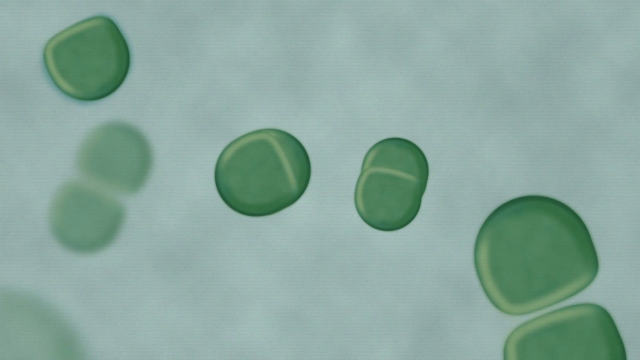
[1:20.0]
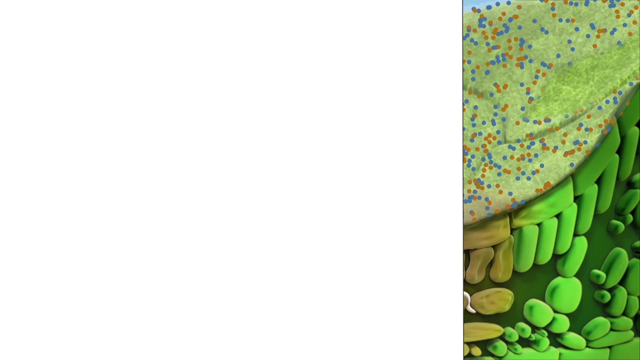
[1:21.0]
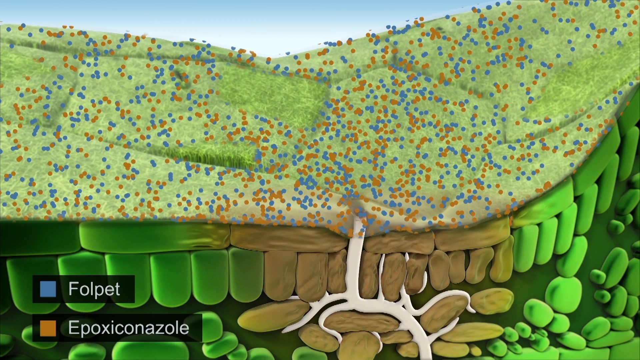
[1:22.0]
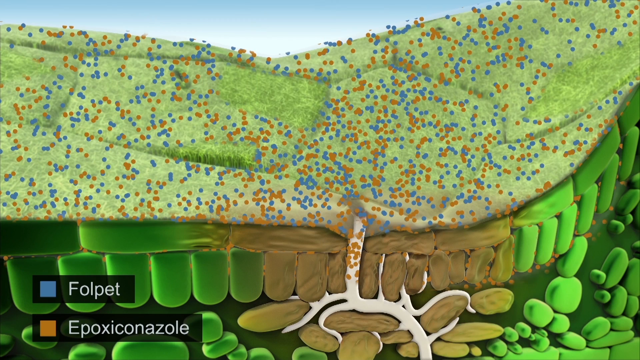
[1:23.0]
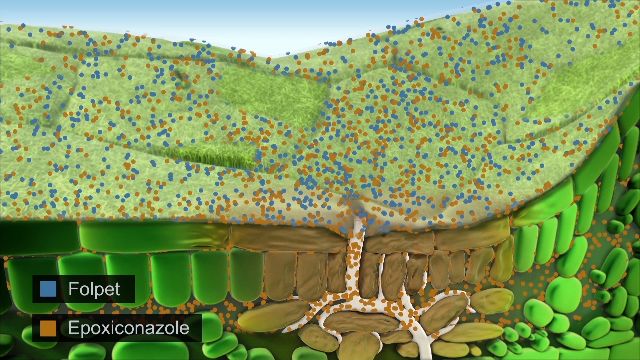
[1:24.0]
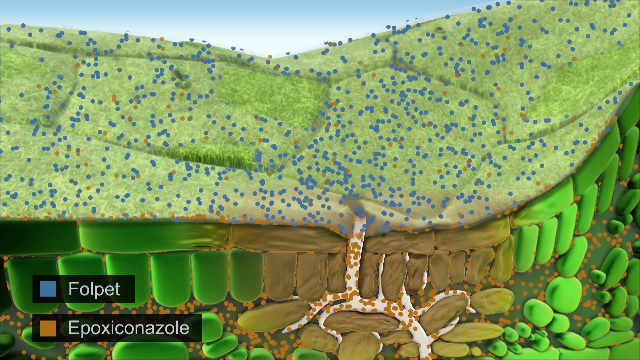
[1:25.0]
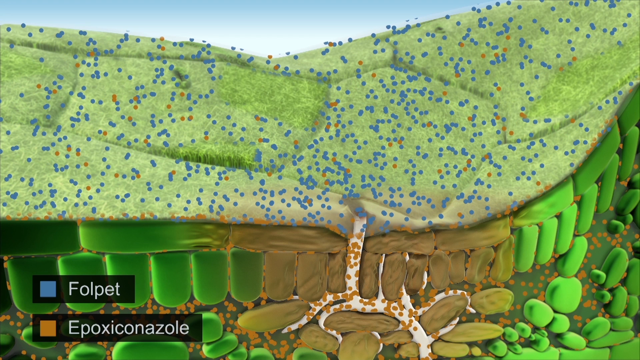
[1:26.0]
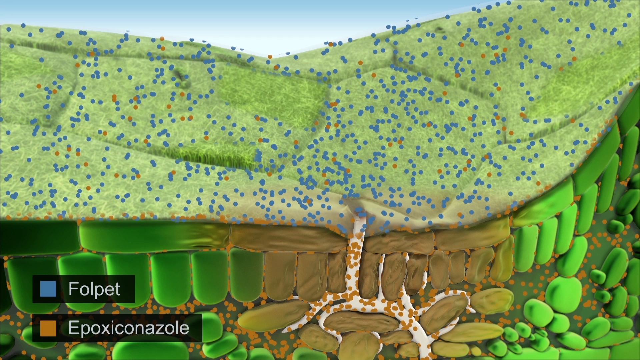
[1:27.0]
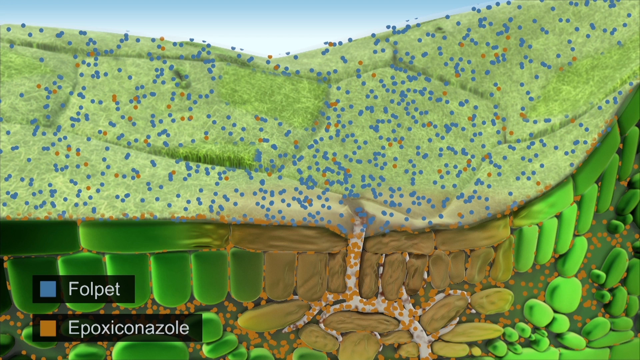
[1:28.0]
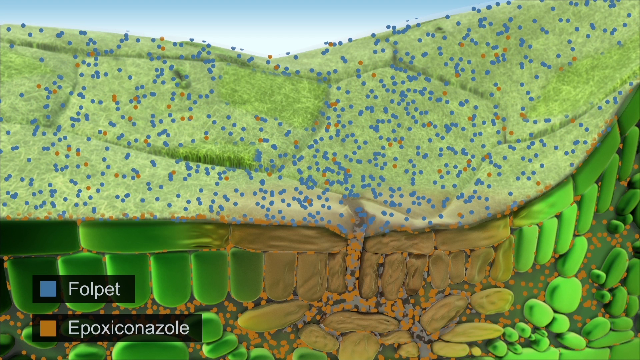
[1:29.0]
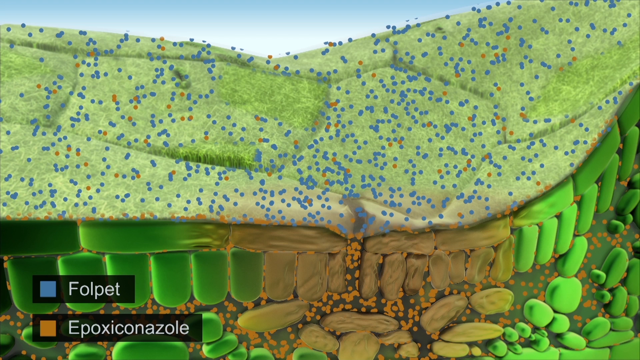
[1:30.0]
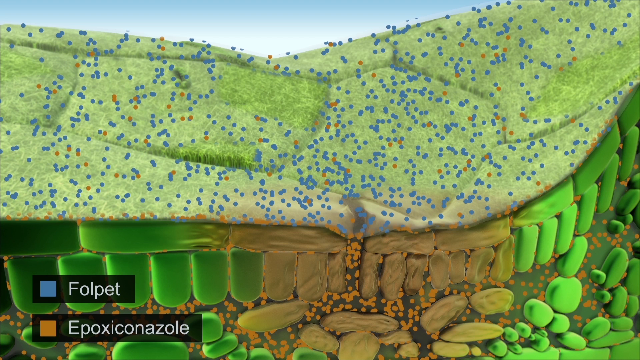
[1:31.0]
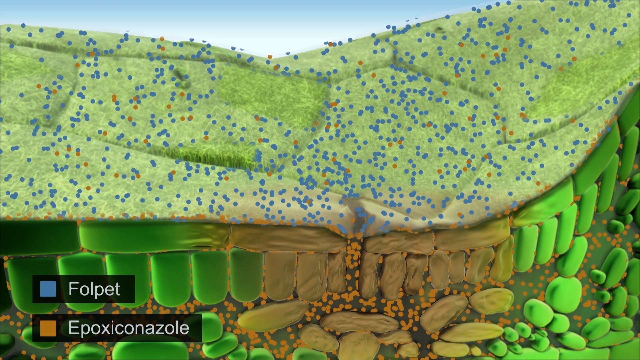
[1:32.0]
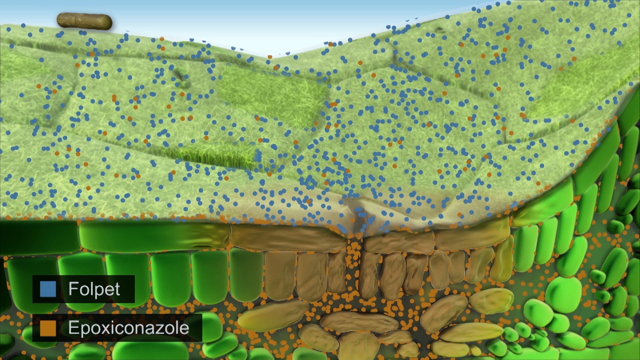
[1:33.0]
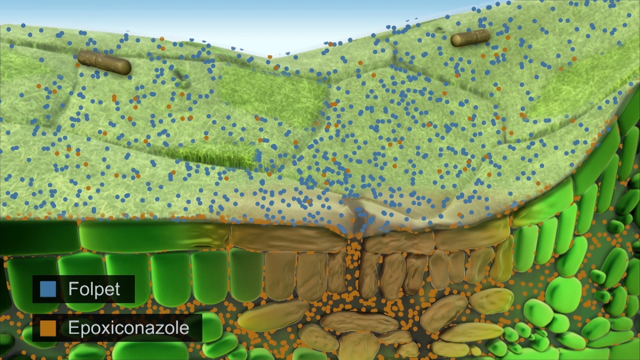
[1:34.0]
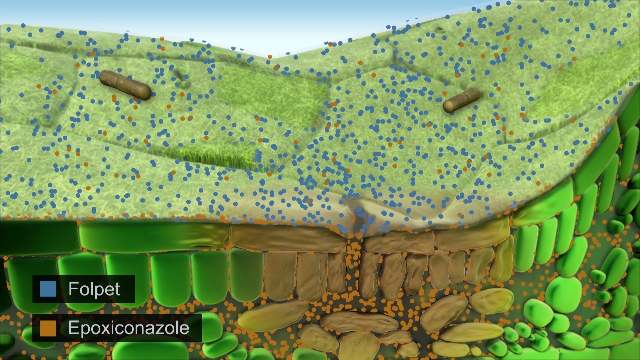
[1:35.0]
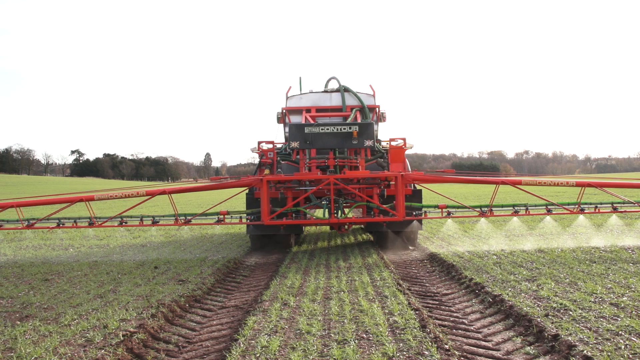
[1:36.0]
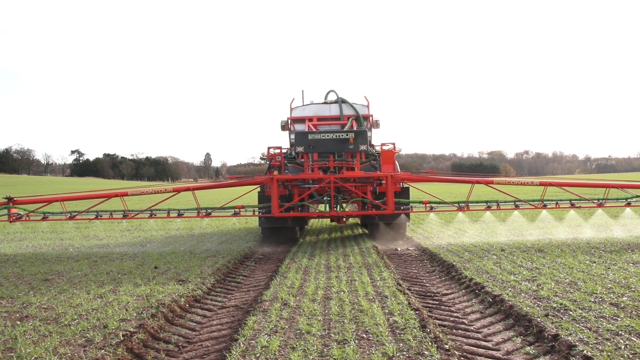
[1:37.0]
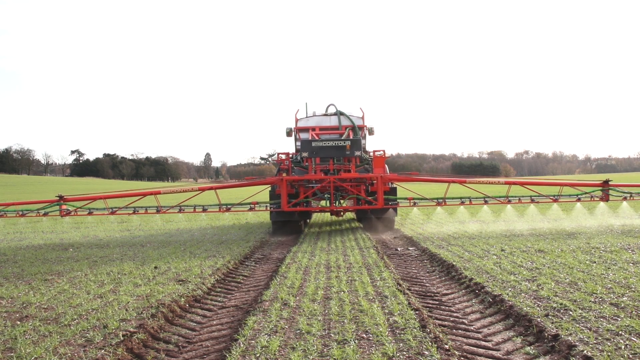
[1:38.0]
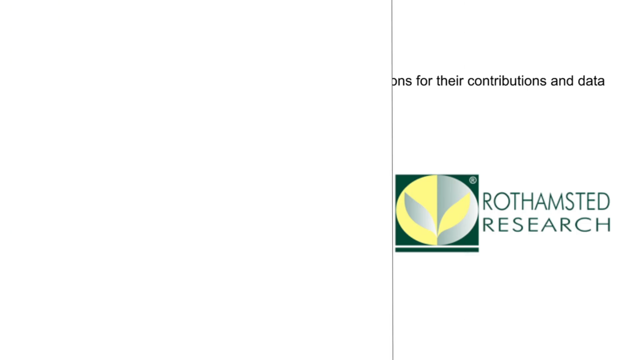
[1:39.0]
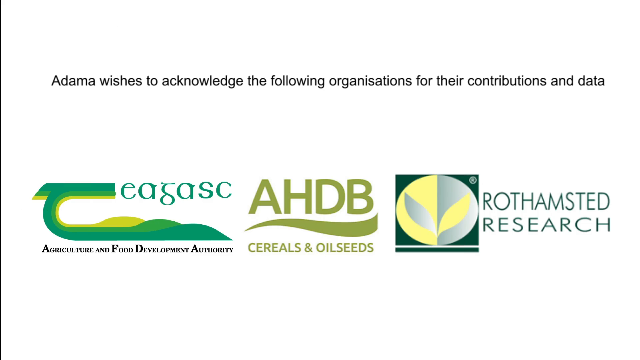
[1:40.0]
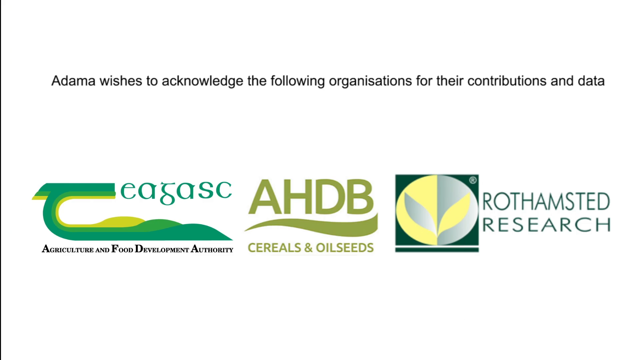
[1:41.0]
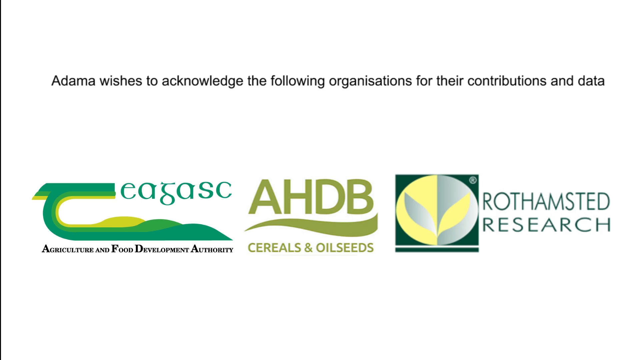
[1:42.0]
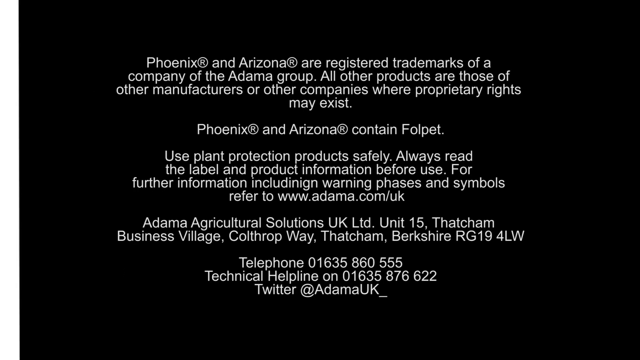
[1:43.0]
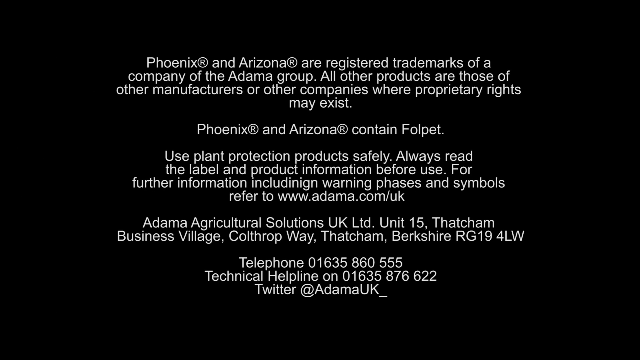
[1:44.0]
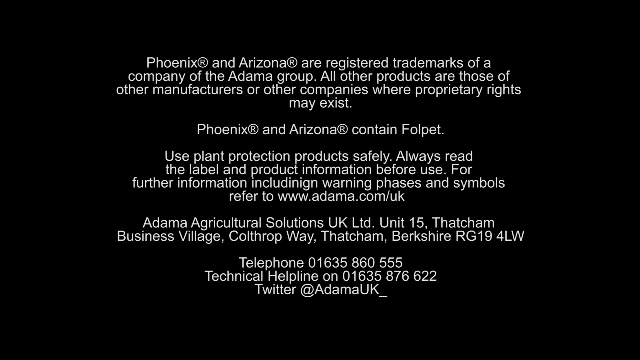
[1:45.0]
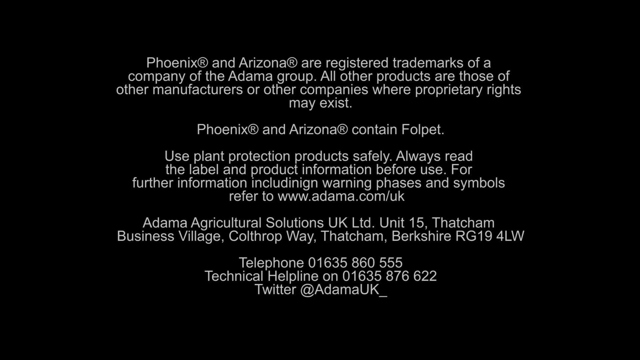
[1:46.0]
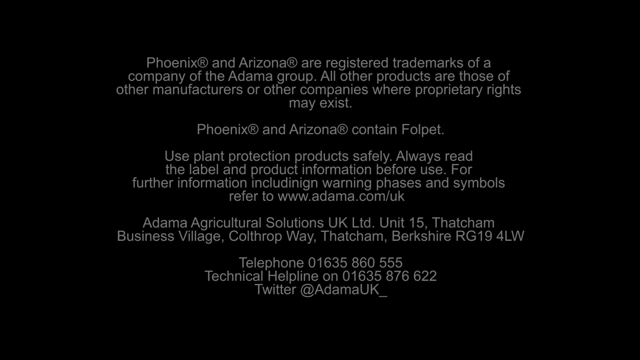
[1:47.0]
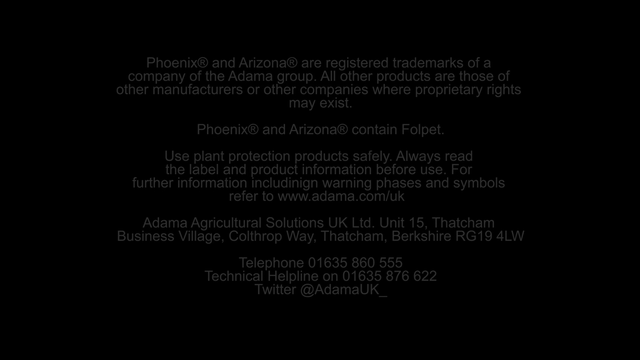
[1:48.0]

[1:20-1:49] A white background transition sweeps from the right side of the screen to the left, and another diagram appears with many blue dots. A key in the bottom left corner shows what the dots represent: blue dots for folpet and brown dots for epoxiconazole. The brown dots flow down underneath the ground, and then the video cuts to a real-life image of a tractor fertilising crops. Another transition sweeps from right to left, followed by an end screen on a white background that says "Adama wishes to acknowledge the following organisations for their contributions and data", listing Agriculture and Food Development Authority, AHDB and Rothamsted Research. Copyright information and contact details, including a phone number, email address and website, appear at the end.